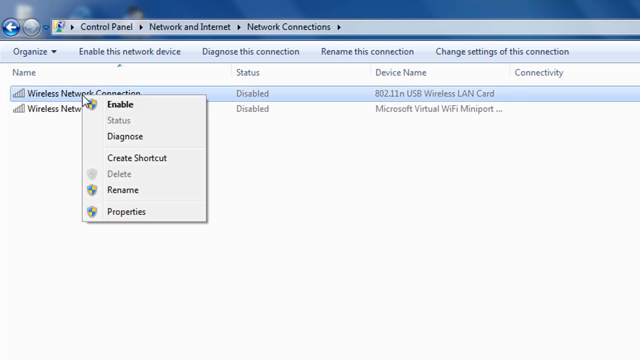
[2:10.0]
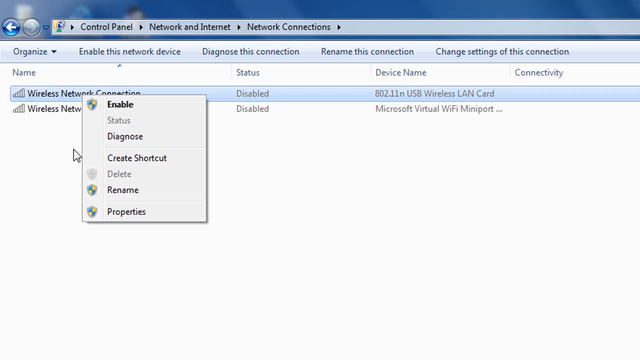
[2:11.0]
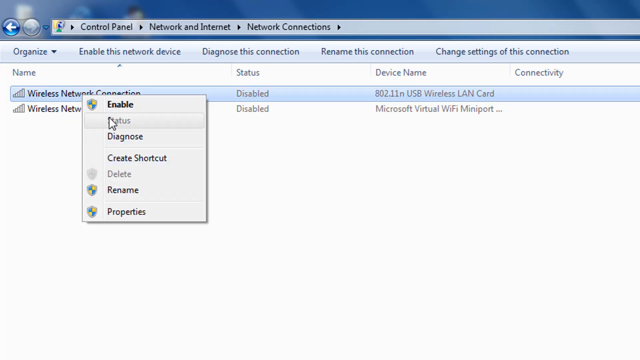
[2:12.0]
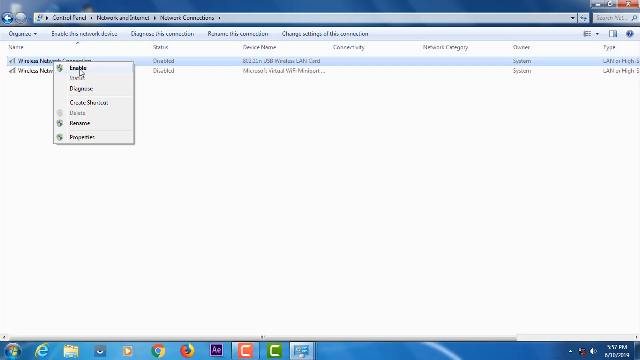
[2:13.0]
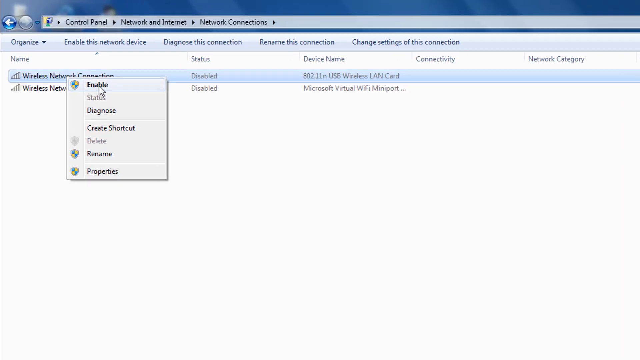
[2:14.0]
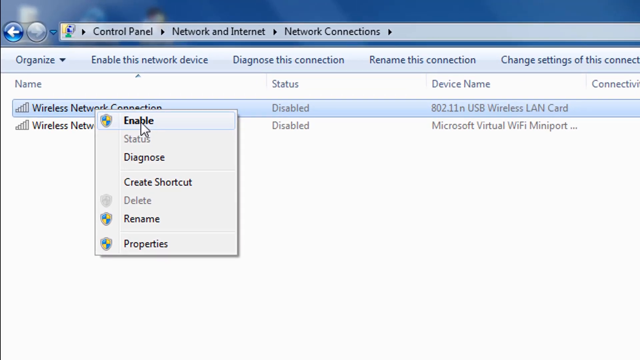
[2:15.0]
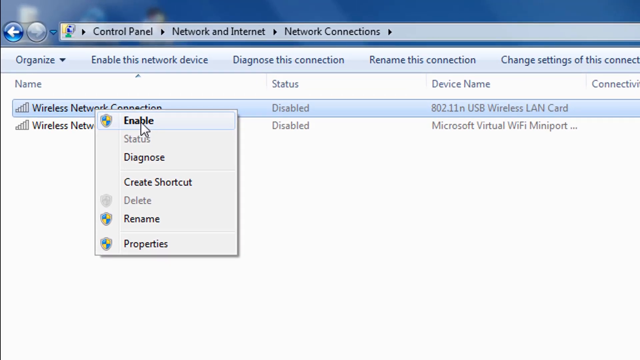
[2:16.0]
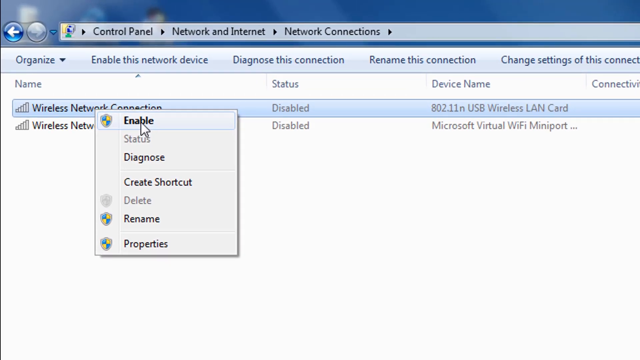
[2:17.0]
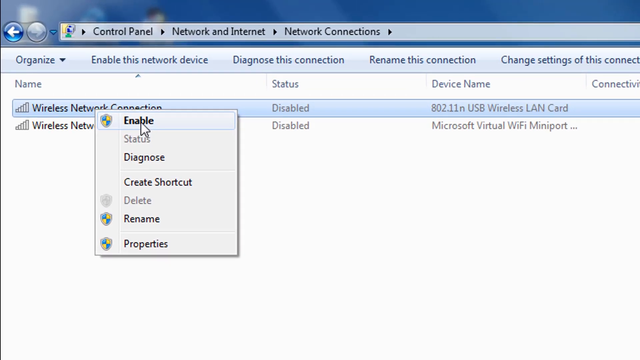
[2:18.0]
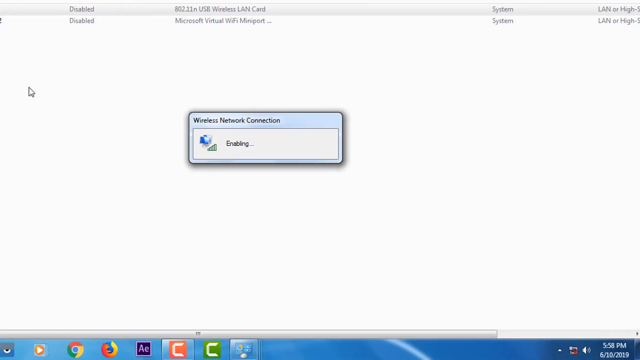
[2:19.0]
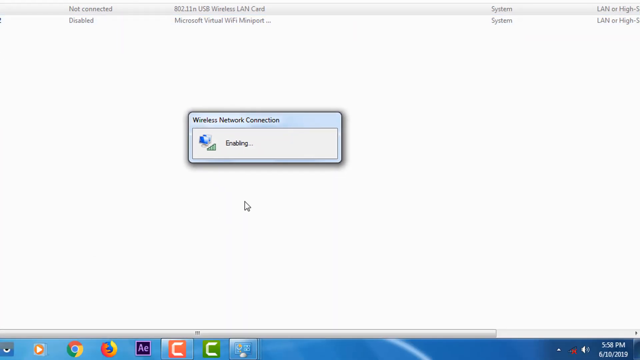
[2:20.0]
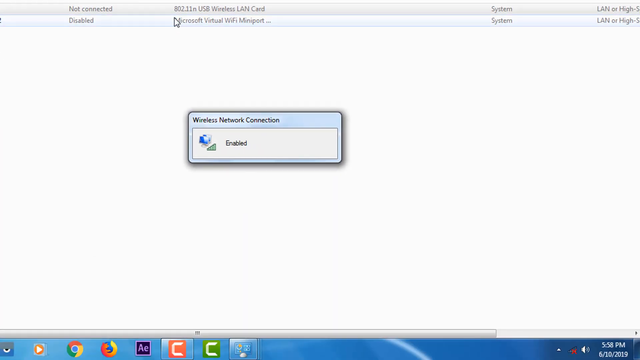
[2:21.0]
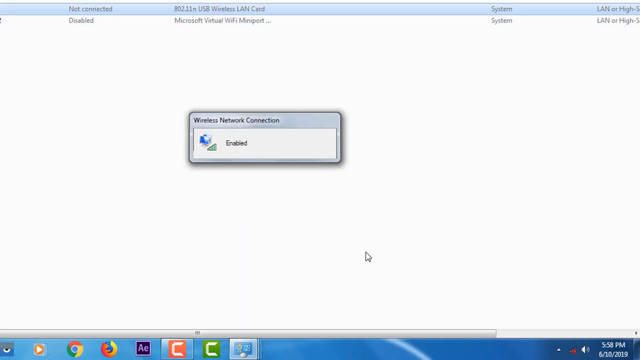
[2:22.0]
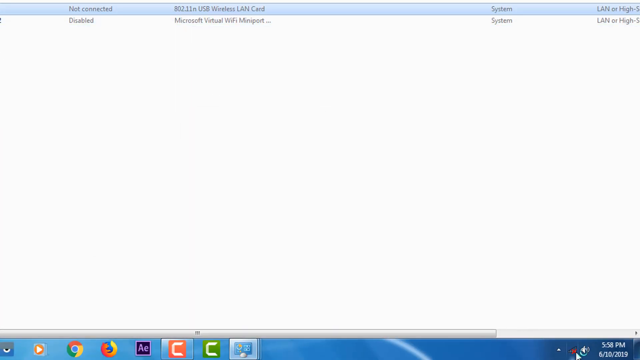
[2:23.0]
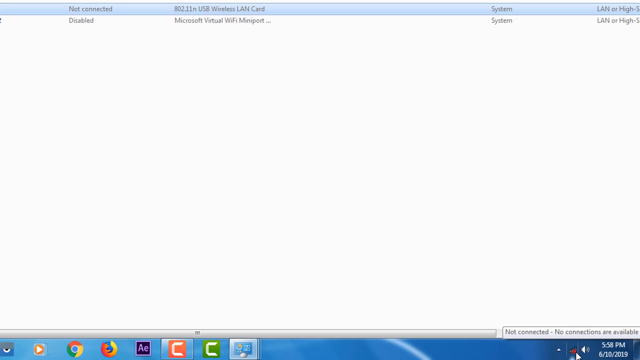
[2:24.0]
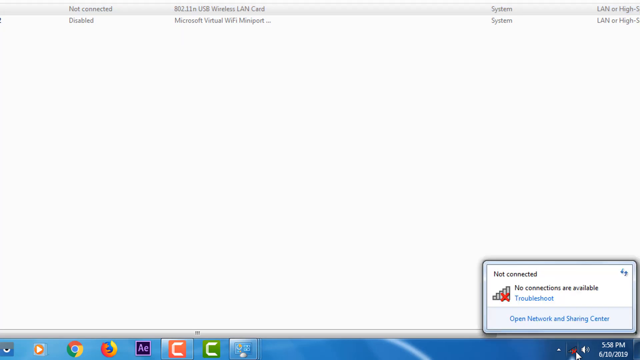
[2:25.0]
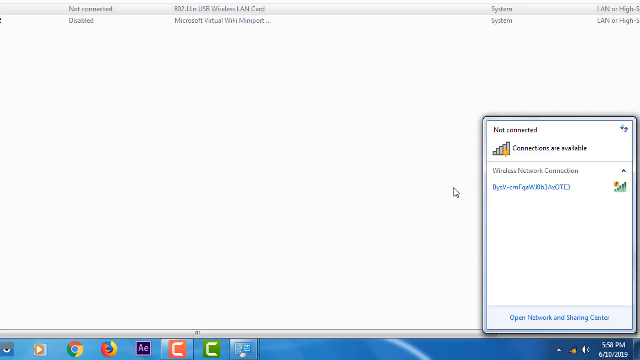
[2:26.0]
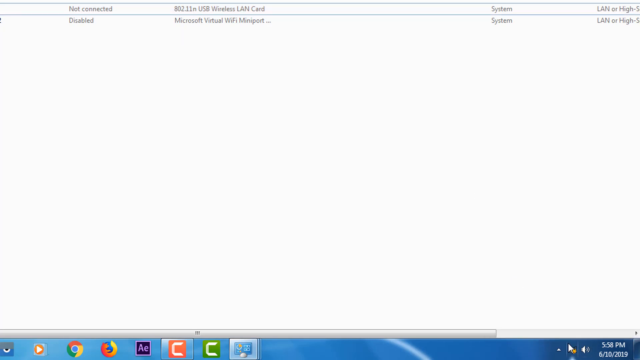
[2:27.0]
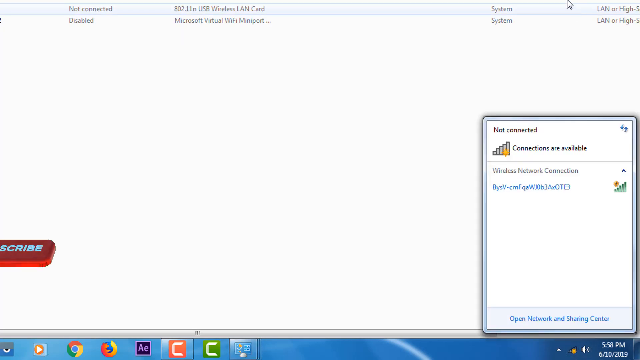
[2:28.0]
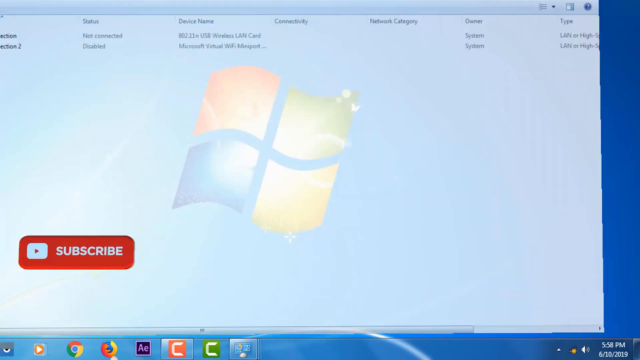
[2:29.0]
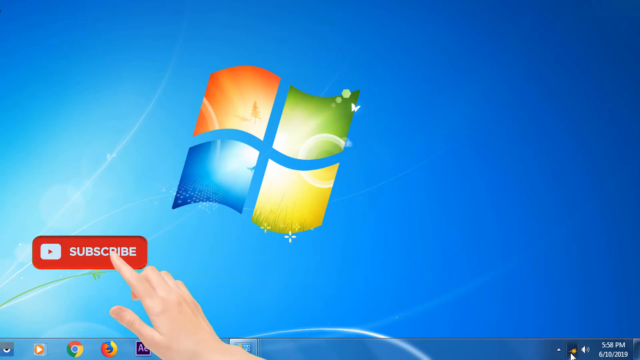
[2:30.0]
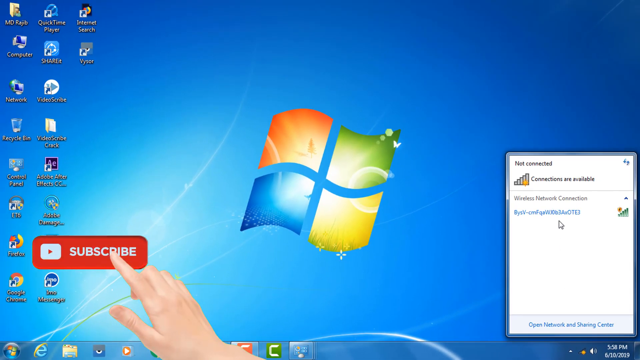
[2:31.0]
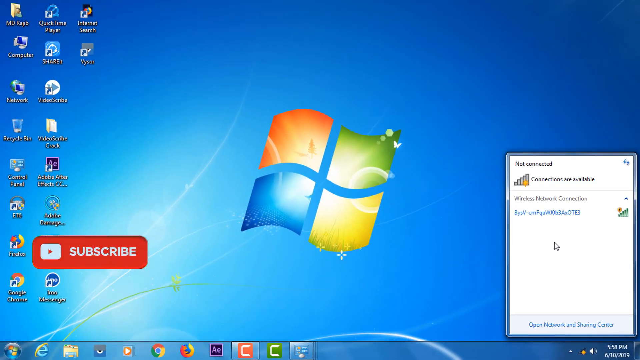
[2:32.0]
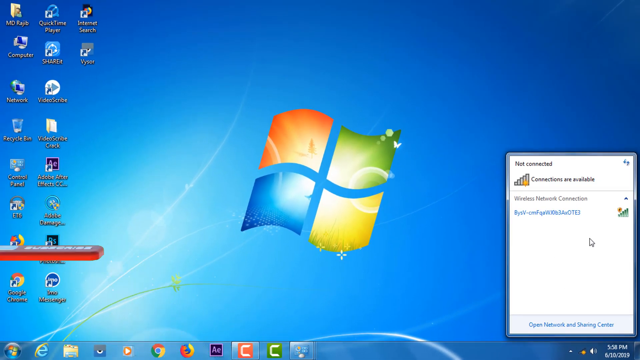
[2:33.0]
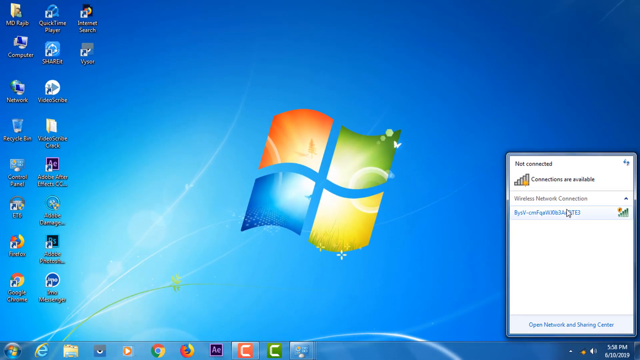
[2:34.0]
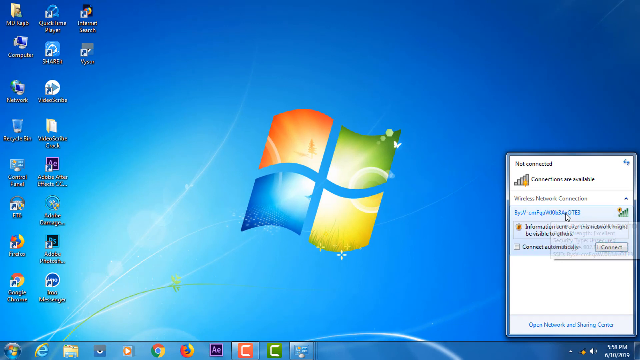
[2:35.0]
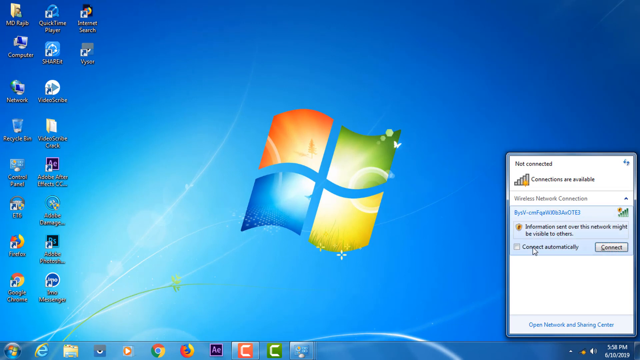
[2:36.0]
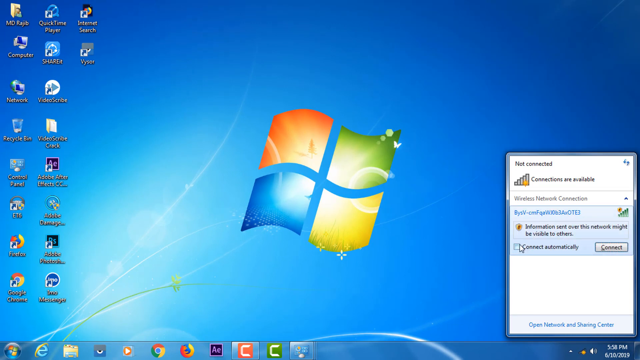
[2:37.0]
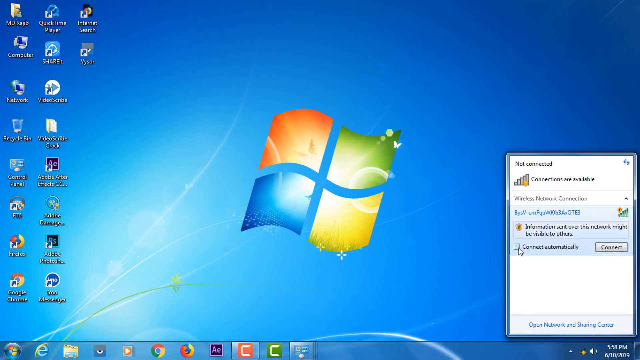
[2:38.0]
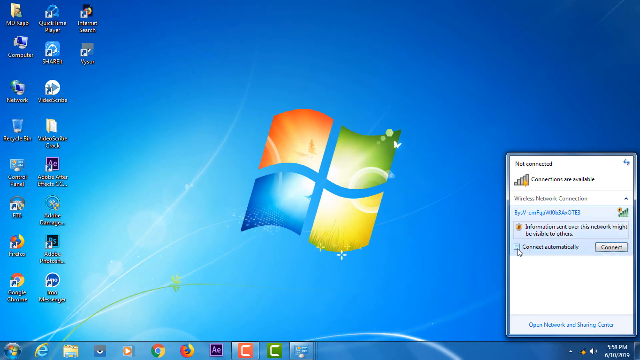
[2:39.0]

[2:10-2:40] In the network connections section of the Control Panel, the user has right-clicked on wireless network connection and hovers over "enable," which has an administration sign next to it, then clicks enable. A pop-up in the middle of the screen shows "Wireless Network Connection" with "enabled" underneath. The user moves to the bottom right of the screen and opens the connection tab, which says "connections are available" and "wireless network connection," showing it is not currently connected. The red YouTube subscribe box with white text pops up in the bottom left of the screen, and a right hand goes up, touches the logo and moves back down out of sight. The user brings up the network connection at the bottom right again, clicks on the router and clicks connect automatically.